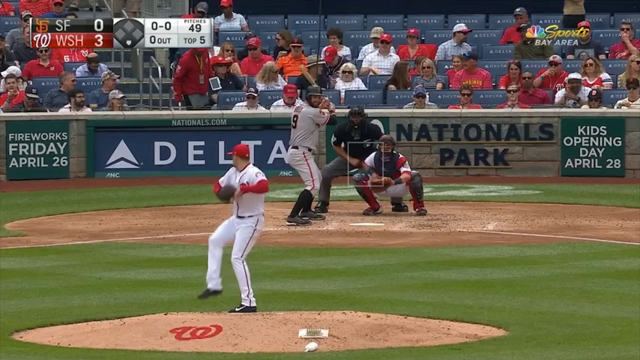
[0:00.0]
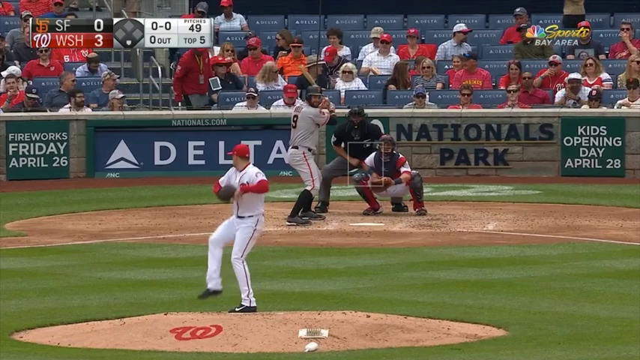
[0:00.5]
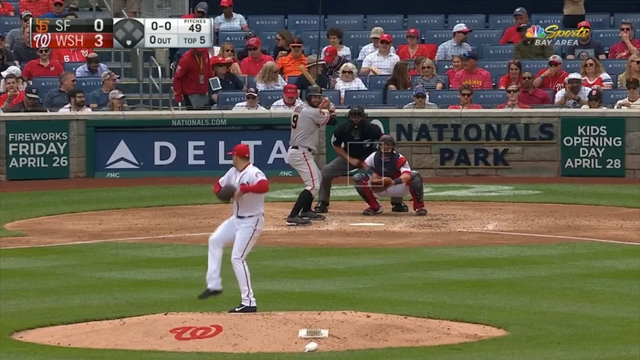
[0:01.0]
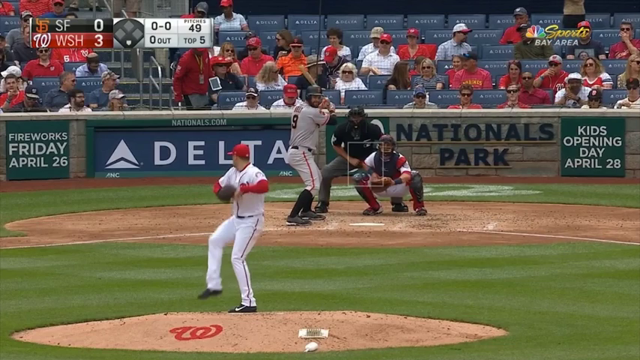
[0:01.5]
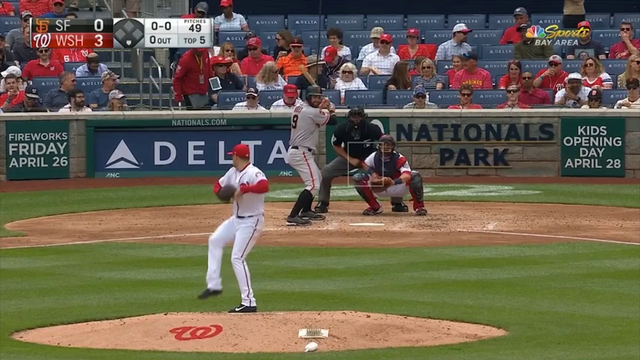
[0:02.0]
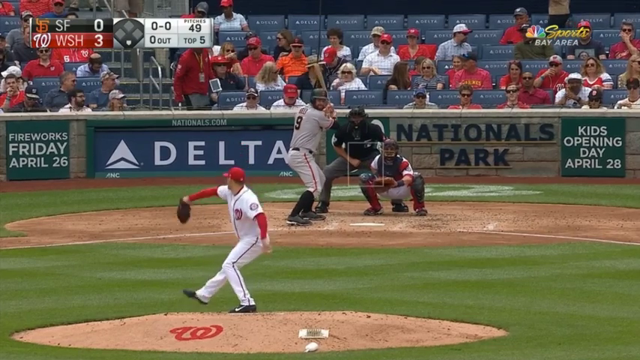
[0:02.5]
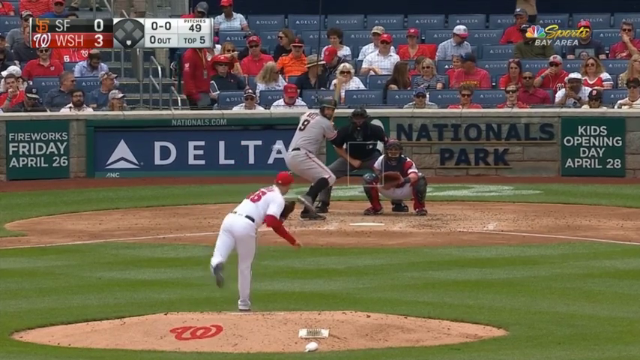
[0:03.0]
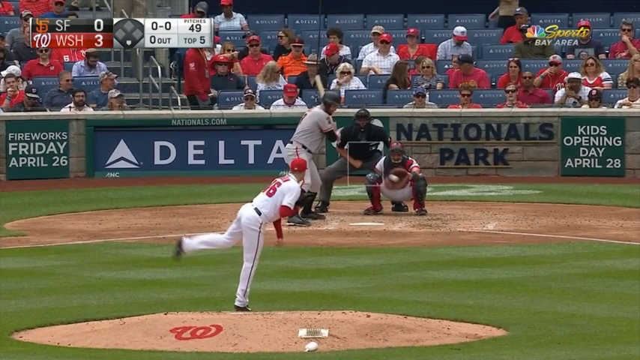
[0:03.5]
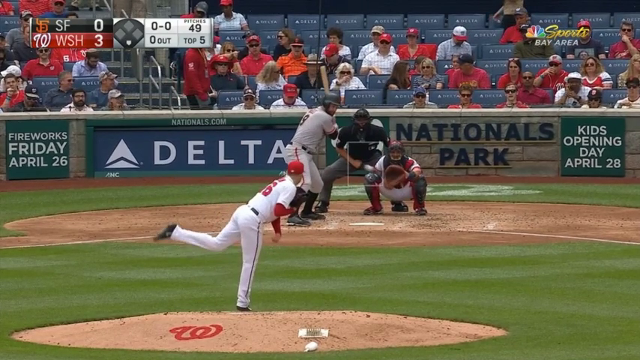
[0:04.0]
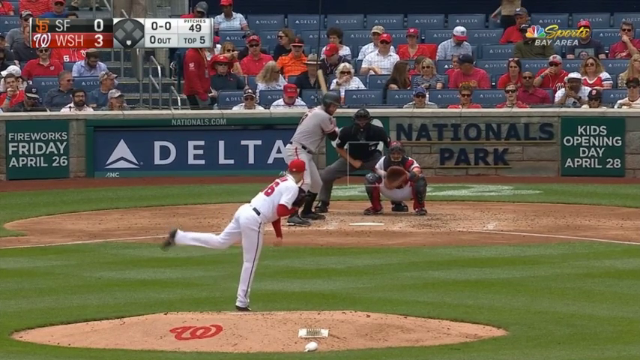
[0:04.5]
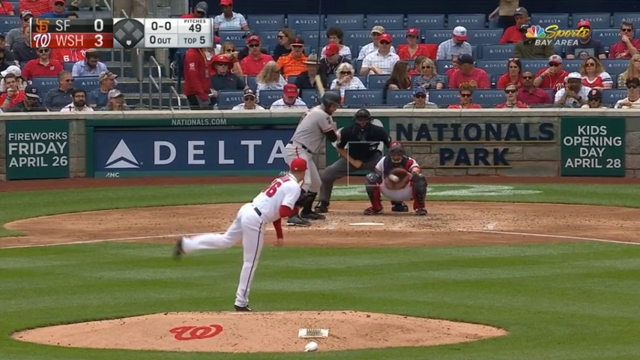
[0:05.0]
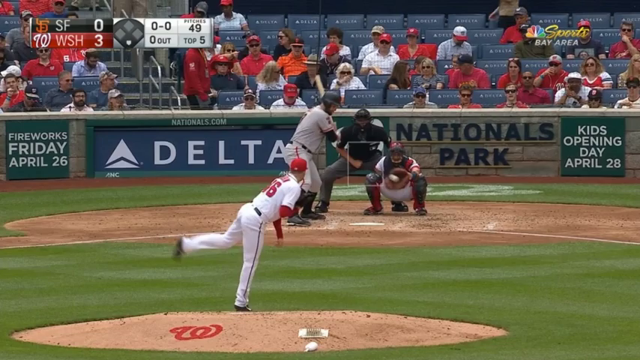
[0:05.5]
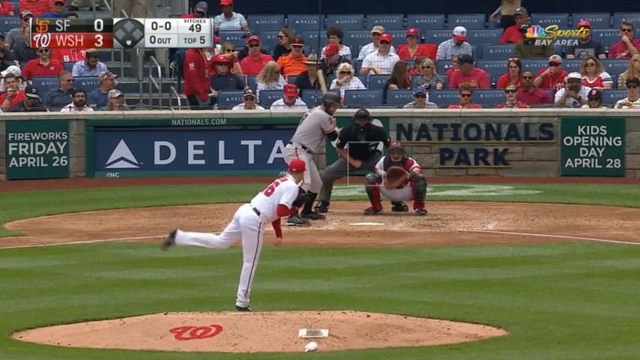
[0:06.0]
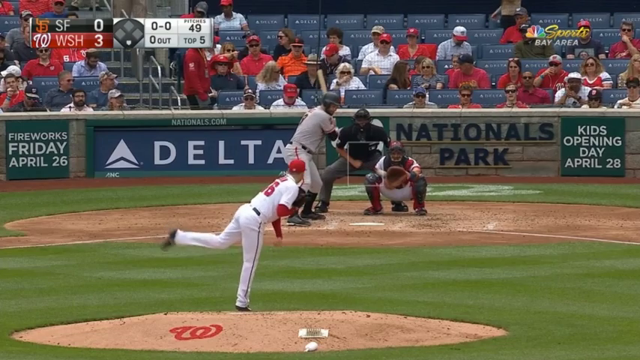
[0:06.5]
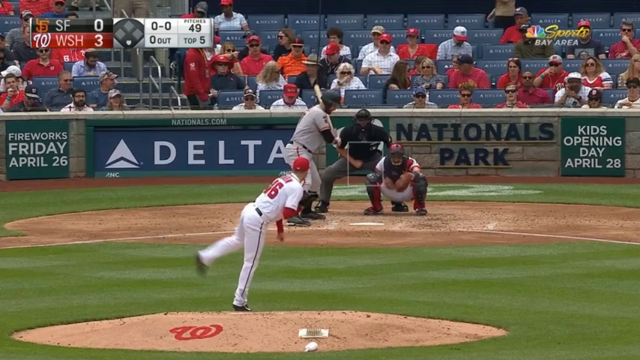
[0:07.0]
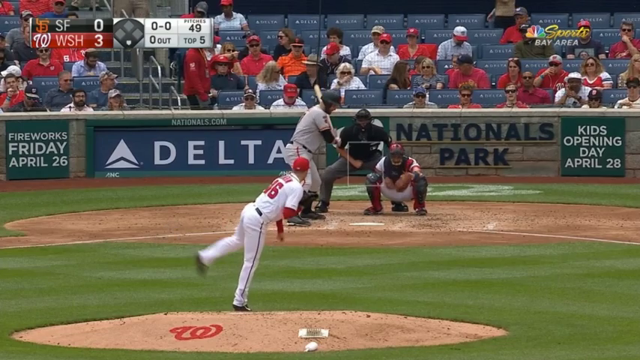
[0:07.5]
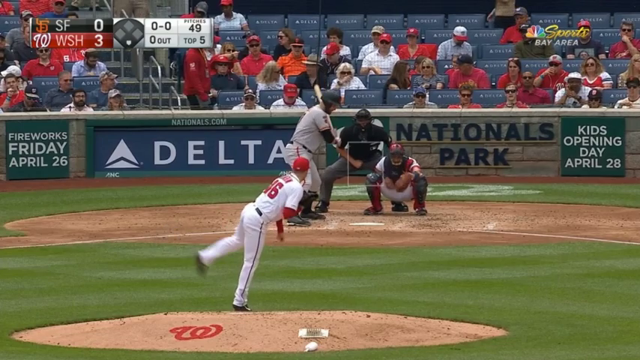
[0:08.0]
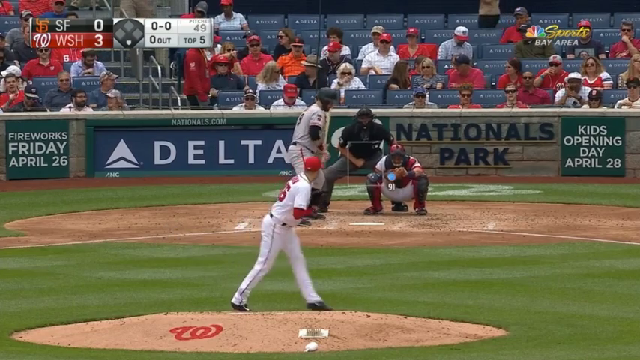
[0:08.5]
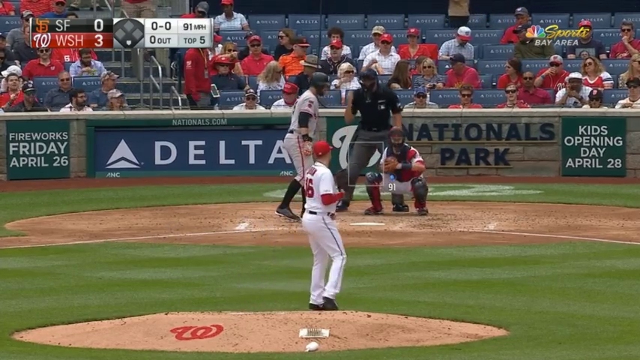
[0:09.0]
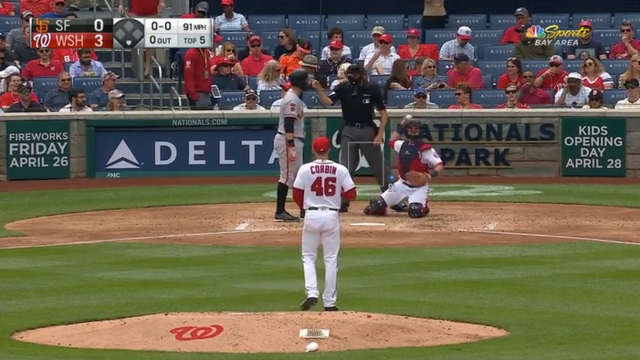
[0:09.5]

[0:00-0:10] A baseball game is underway, and the team with red hats and white tops is pitching towards the team in fawn. The SF team has black numbers, socks and hats and has scored 0; the WSH team, with red hats and red tops, has scored 3. On screen are "49 pitches", "0 for 0", "0 out" and "top 5". Supporters of the WSH team are shown; the crowd is not too animated and the stands are not full. The game is in Nationals Park. The red-hatted player pitches, the batter does not hit the ball, and it goes straight to the catcher. Behind the catcher is what looks like a referee wearing a helmet.